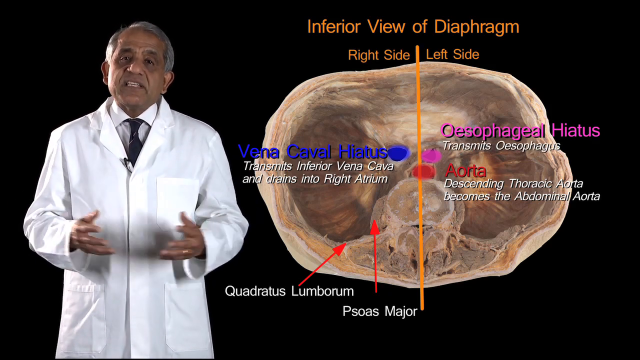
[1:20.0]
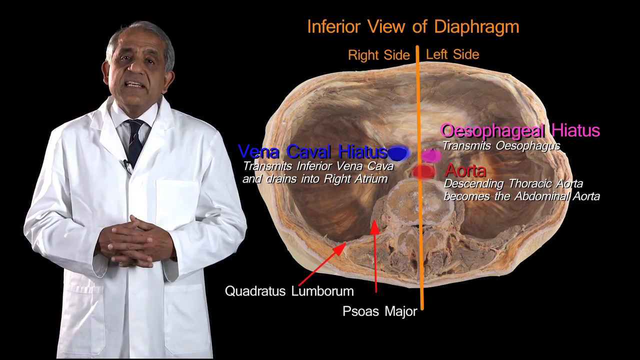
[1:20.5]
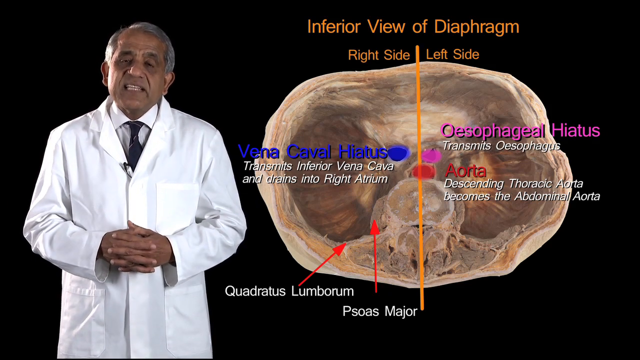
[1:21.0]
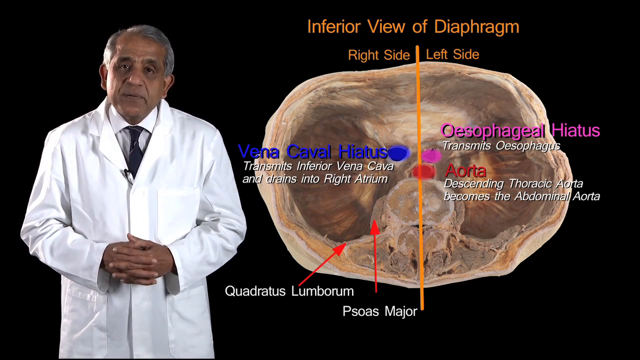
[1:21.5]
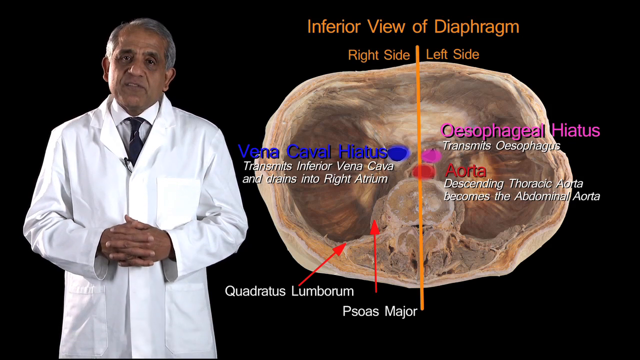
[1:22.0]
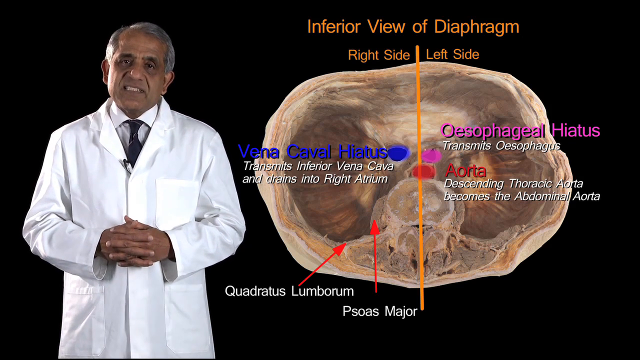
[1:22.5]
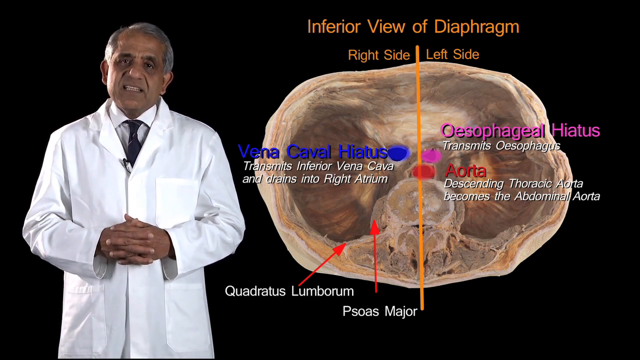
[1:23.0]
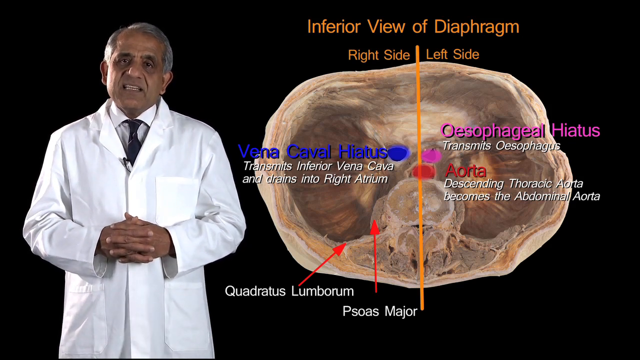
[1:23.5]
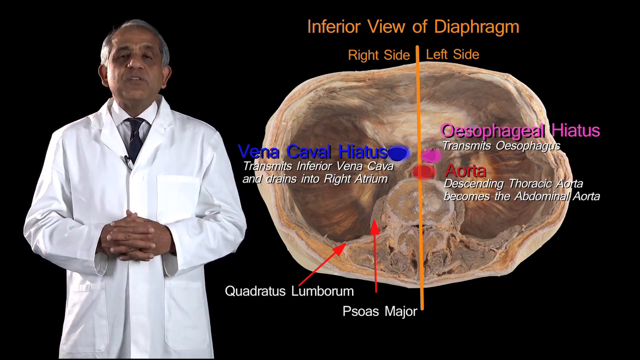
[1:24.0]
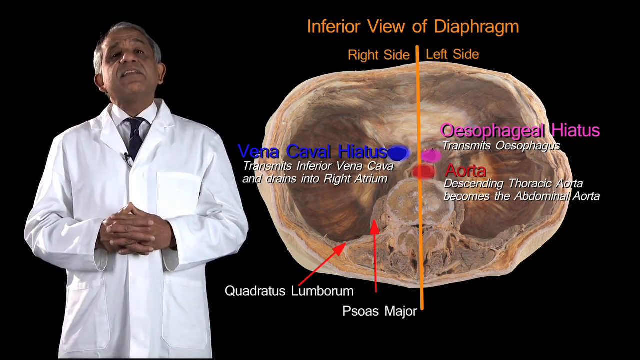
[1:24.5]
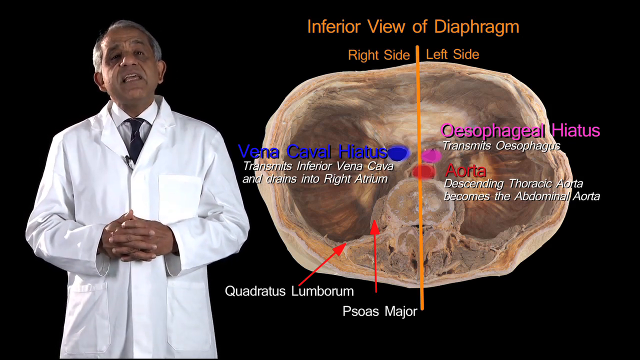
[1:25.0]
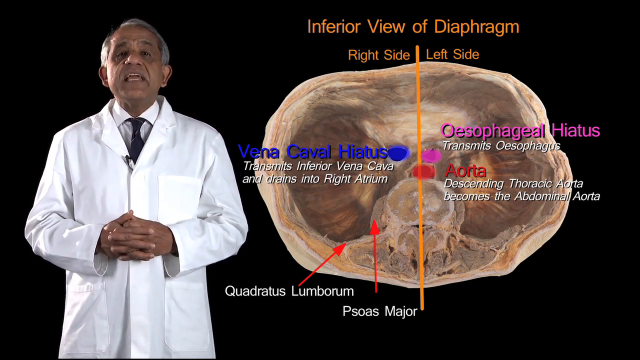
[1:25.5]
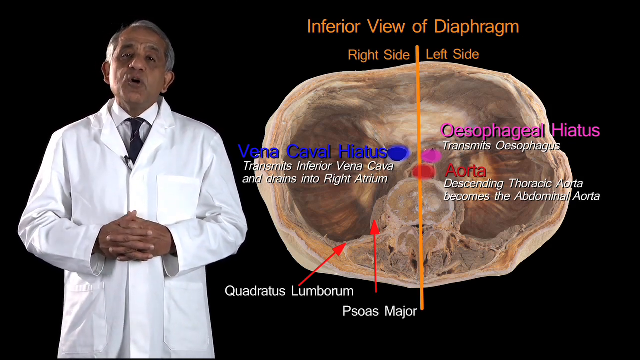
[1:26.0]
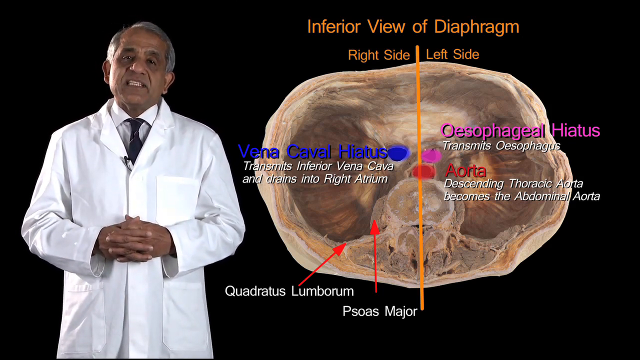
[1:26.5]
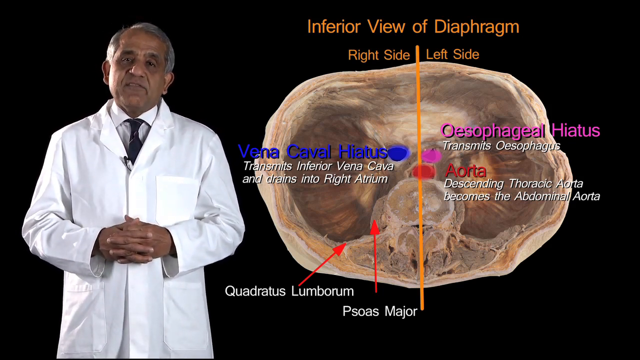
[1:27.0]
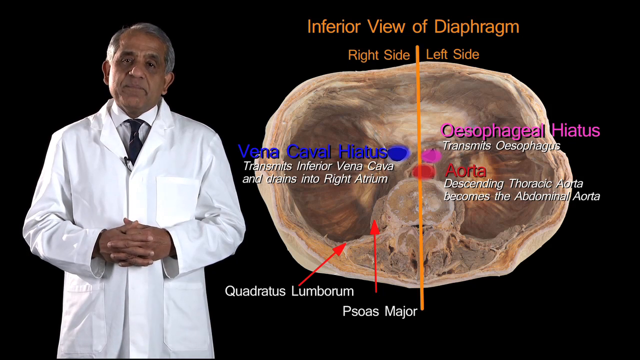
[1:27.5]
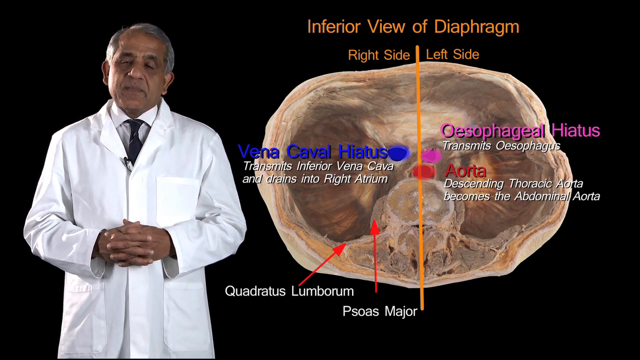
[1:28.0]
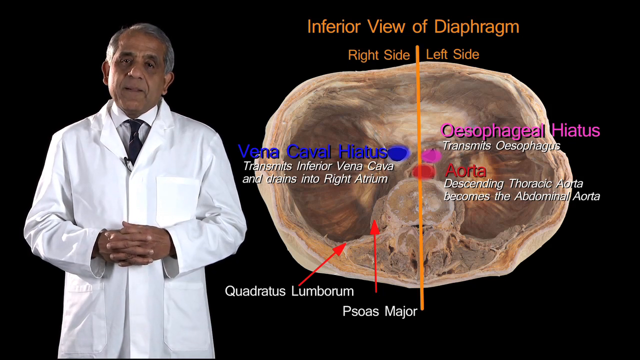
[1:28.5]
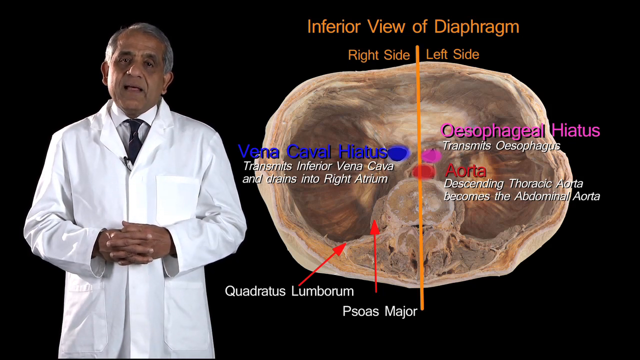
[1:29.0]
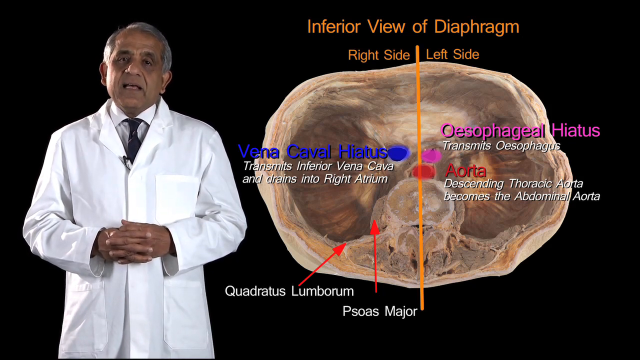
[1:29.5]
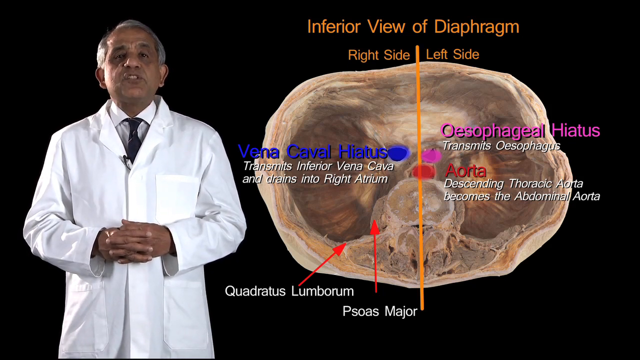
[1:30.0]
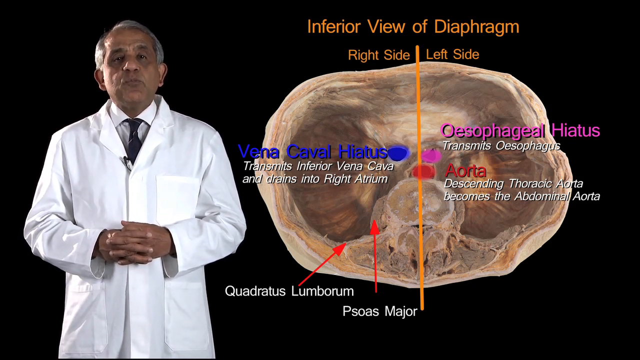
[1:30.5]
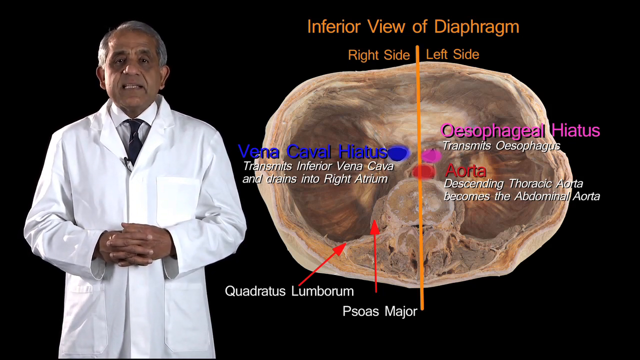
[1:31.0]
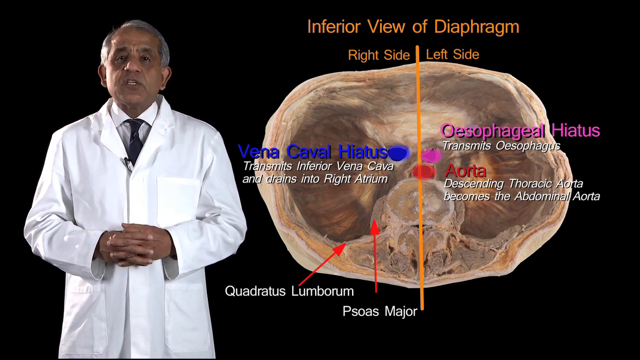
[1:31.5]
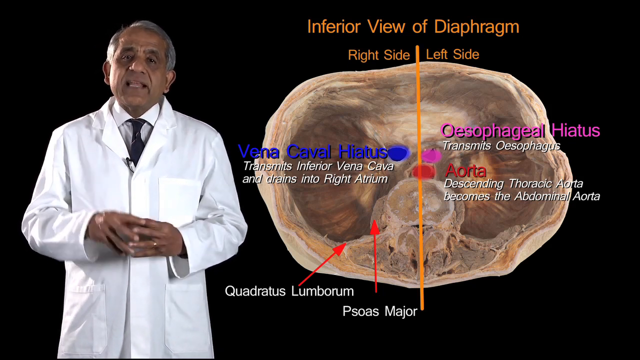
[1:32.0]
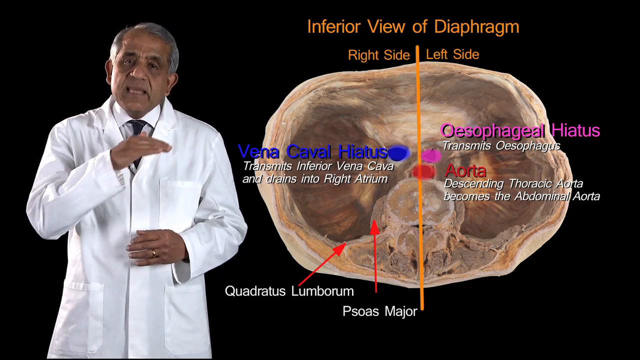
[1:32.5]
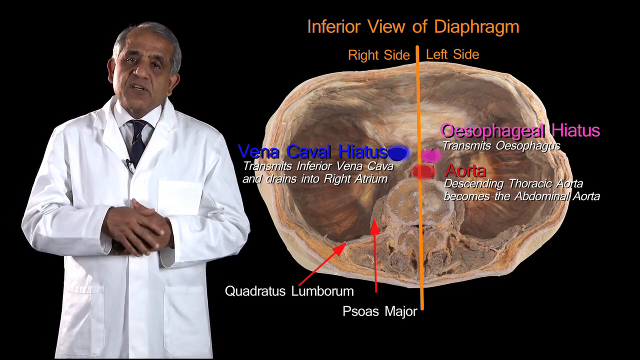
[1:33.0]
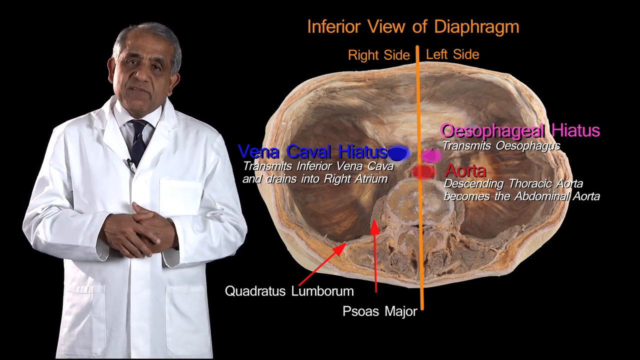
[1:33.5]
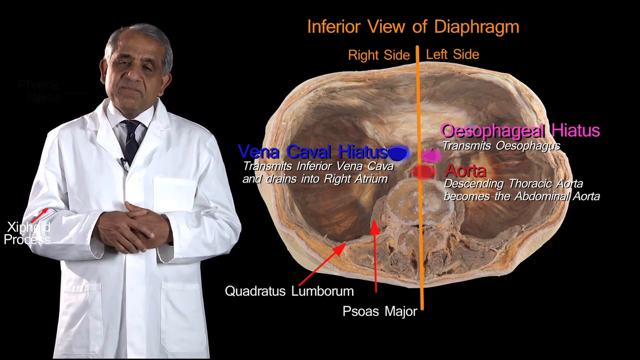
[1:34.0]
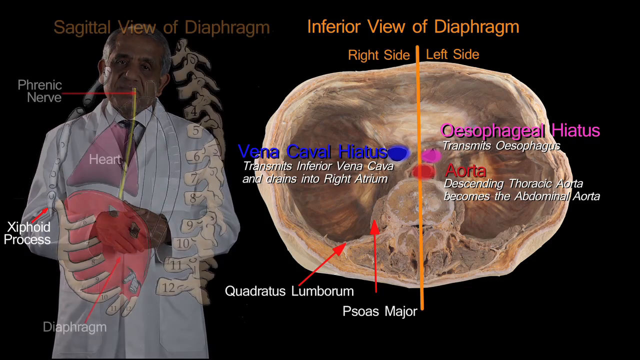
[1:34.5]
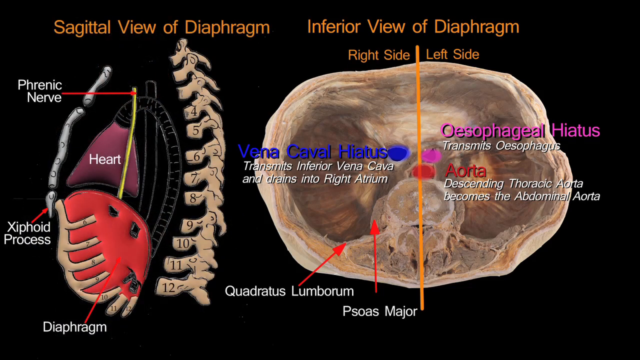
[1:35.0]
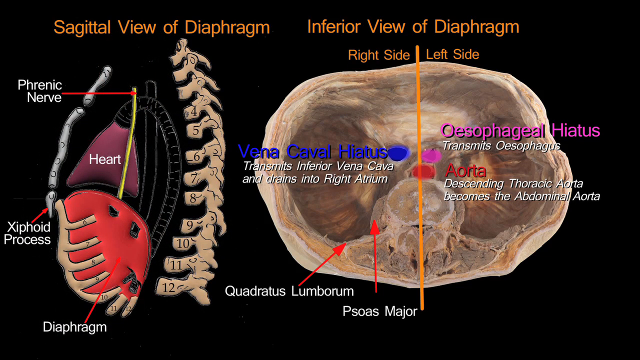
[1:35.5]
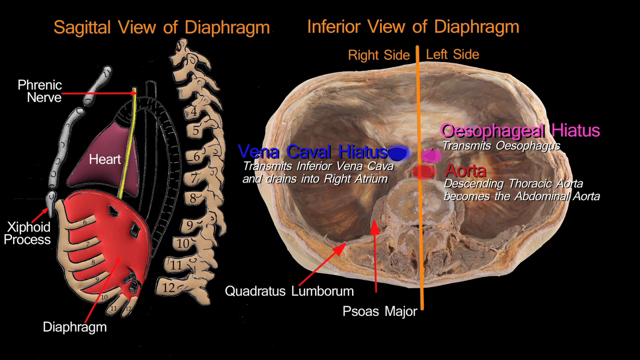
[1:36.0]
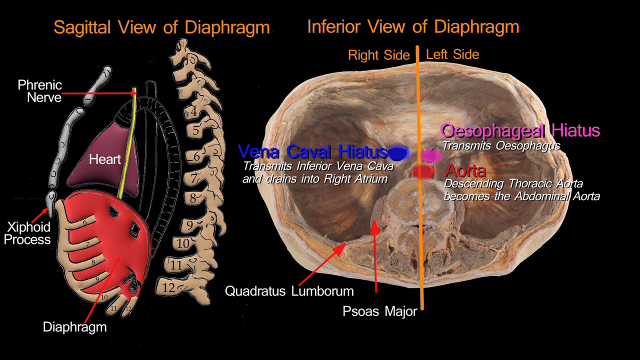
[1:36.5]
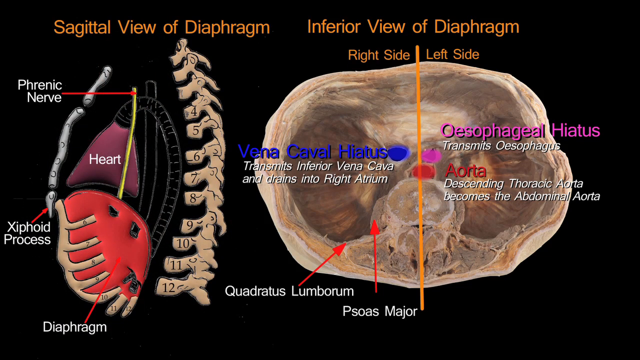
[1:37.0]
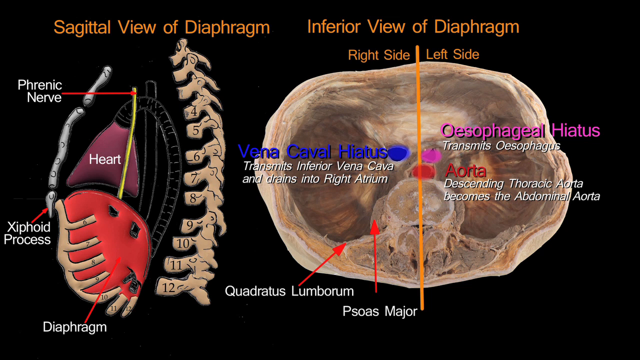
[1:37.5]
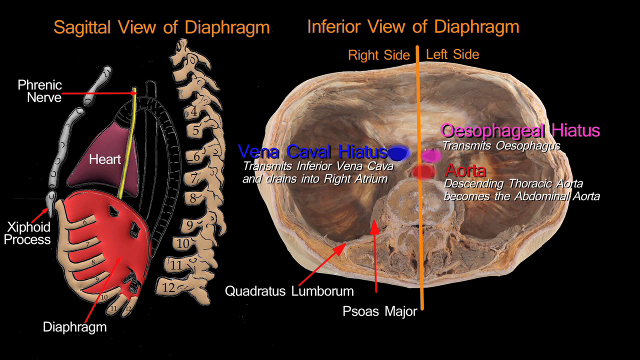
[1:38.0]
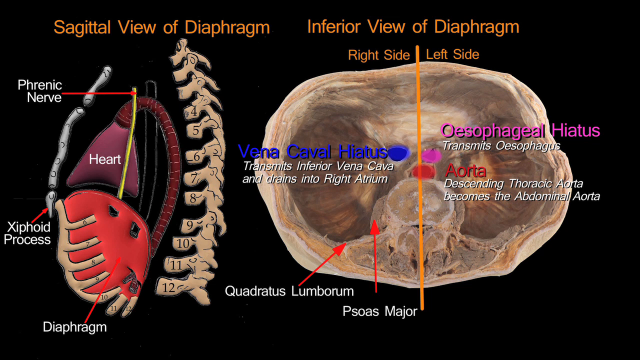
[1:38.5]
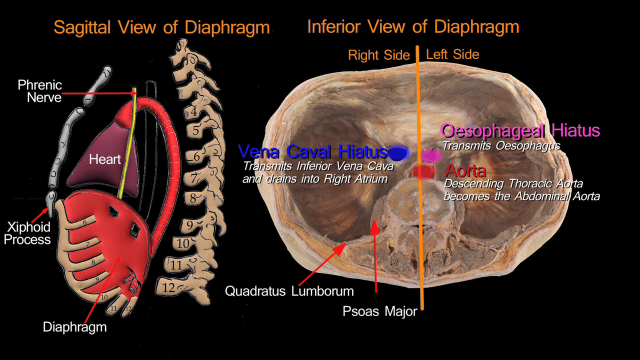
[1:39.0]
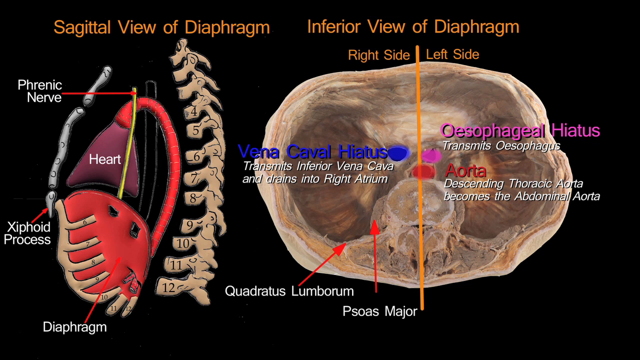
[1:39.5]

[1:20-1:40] On a black background, the professor is on the left with the same image of the inferior view of the diaphragm, labelled in orange and blue writing. Another label then appears on the diaphragm: a pink label reading "oesophageal hiatus" with "transmits oesophagus" underneath, on the left side of the diaphragm. The view then changes: the professor goes off the screen and is replaced by an image of the sagittal view of the diaphragm. This is also a graphic, showing the spine on the right, the heart, the lungs and the ribs, with labels including the phrenic nerve and the xiphoid process. It then cuts back to the professor talking a little more. The whole time, the image of the inferior view of the diaphragm stays on the right side of the screen.